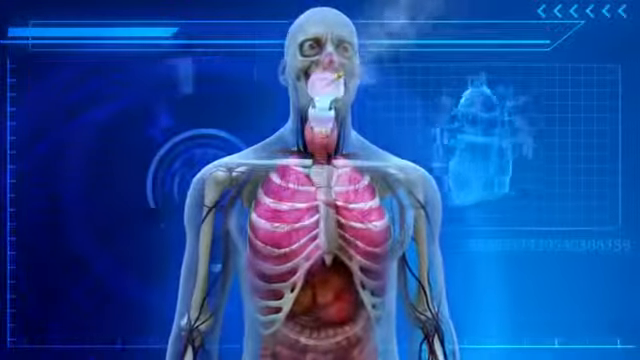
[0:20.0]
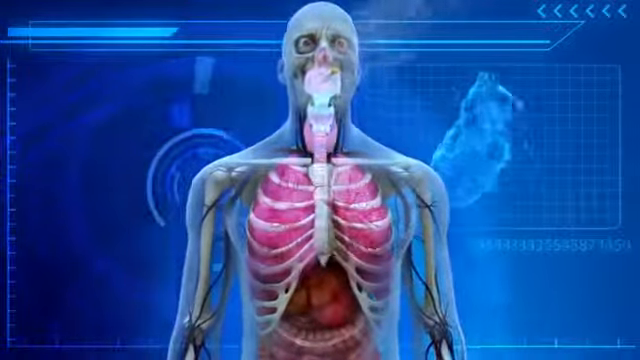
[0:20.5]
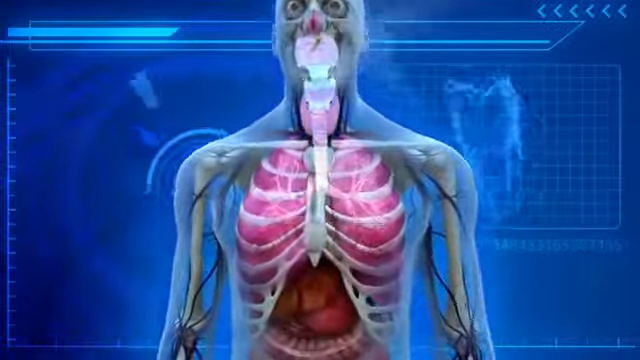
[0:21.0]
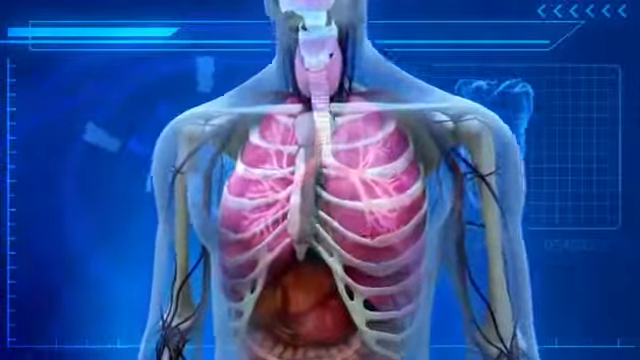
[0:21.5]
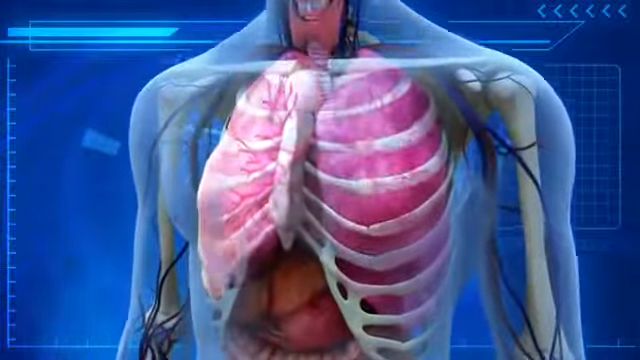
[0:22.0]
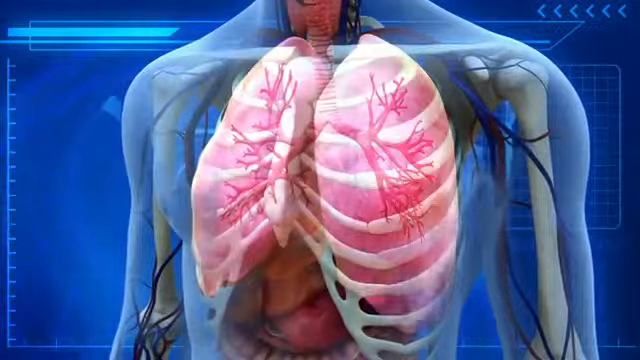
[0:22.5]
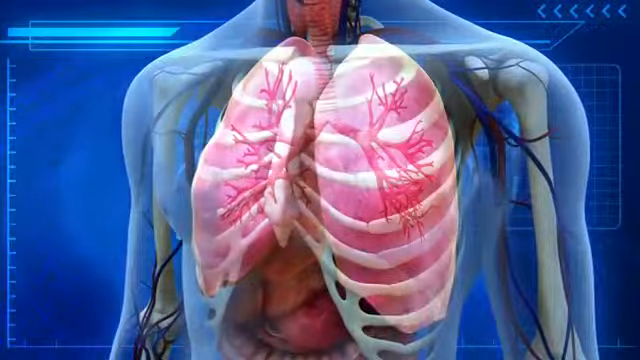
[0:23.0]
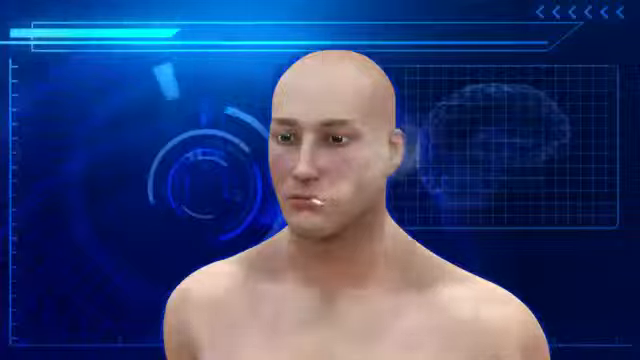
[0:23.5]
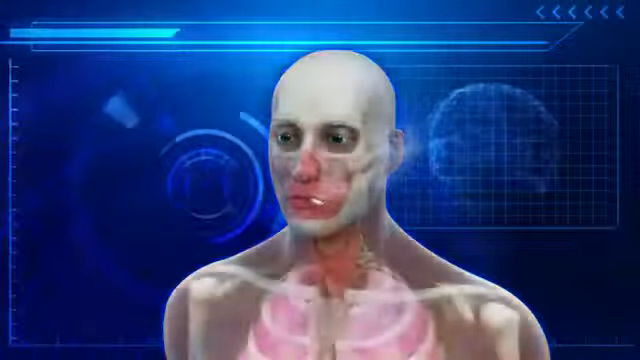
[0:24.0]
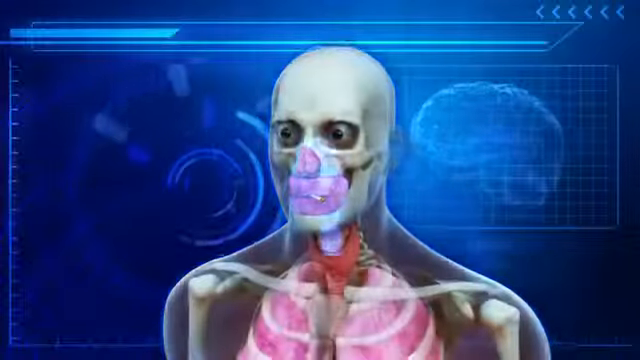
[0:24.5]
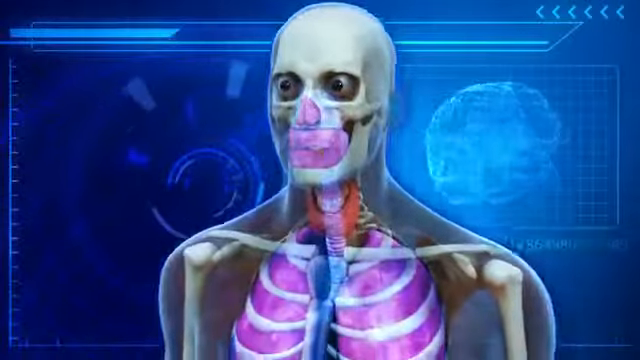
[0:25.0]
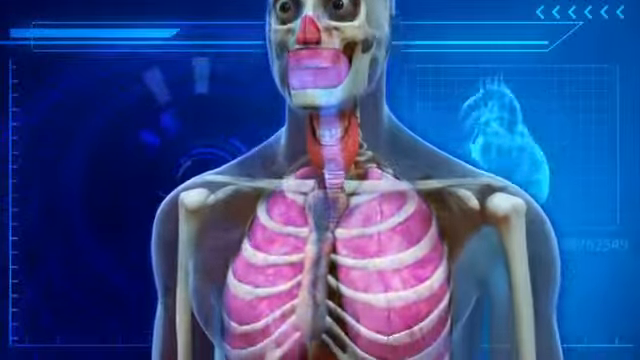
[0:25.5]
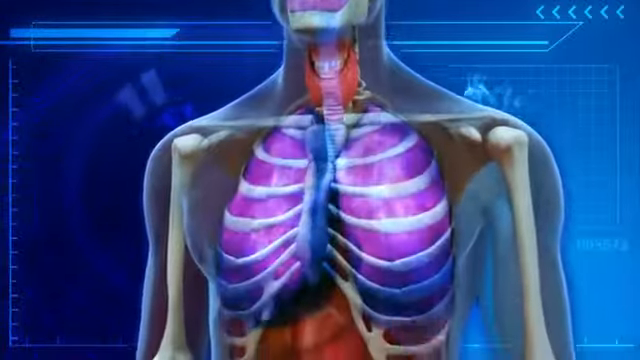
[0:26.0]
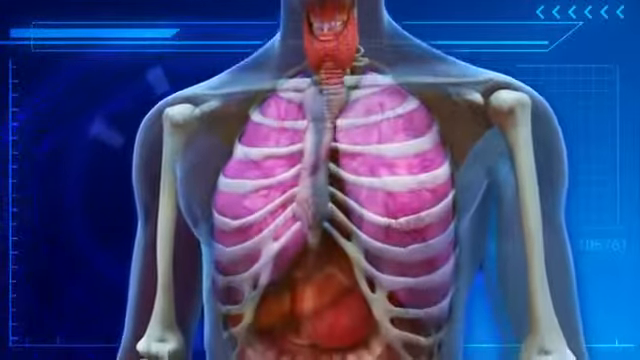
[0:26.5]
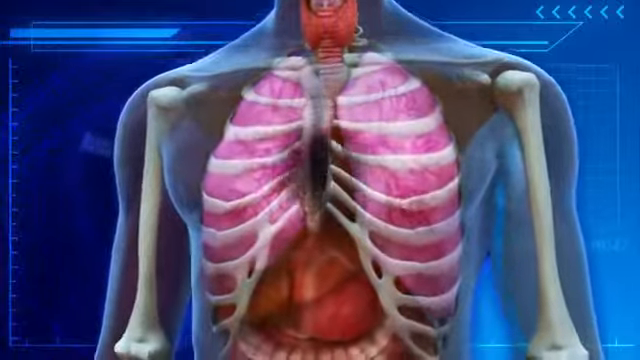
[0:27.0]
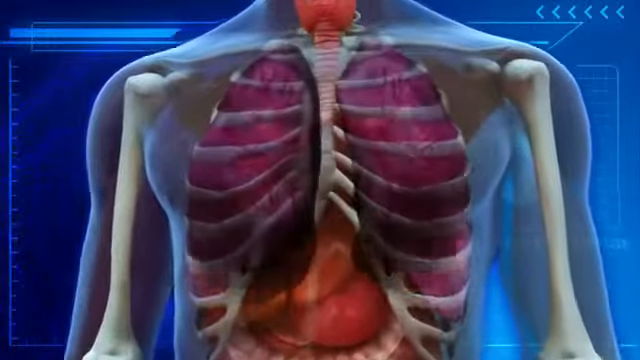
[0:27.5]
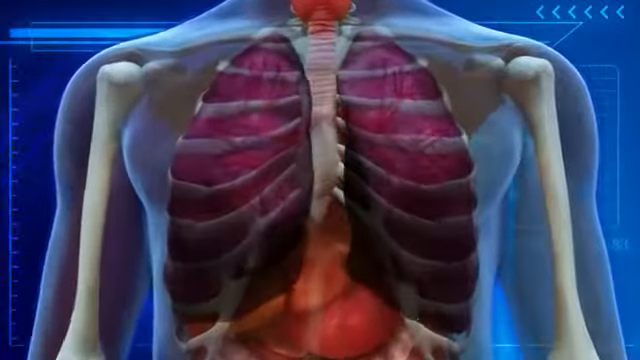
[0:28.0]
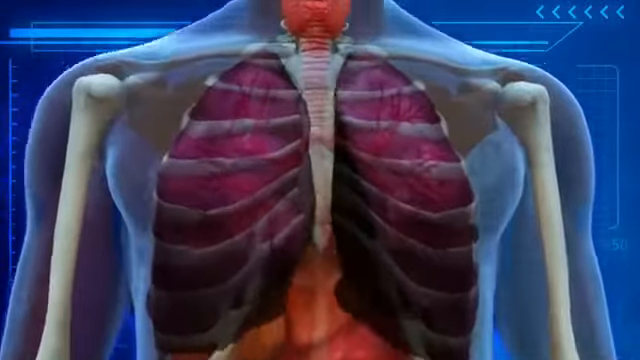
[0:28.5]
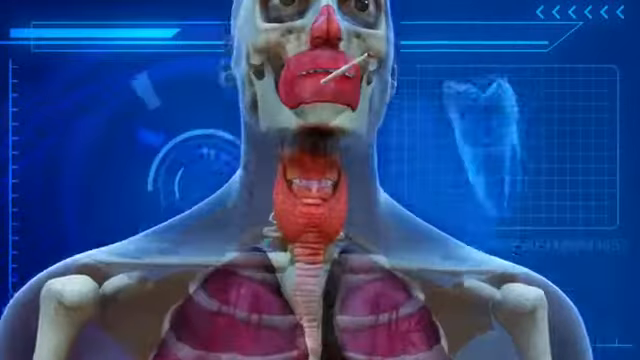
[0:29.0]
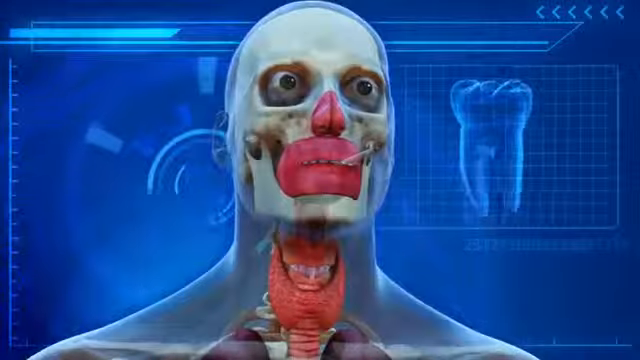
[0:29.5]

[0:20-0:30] Another animated CGI-type image shows a human body that is partly see-through, revealing the bones and organs, including the lungs. The view zooms in on the lungs and highlights them, seemingly showing their inner workings, then pulls back out and pans up to the head. The image turns into another see-through skeleton with the skull visible, and the view pans down to show the esophagus highlighted along with the lungs. The lungs turn from light to dark. The view pans up again over the skeleton, which now has what appears to be a cigarette sticking out of the left side of its mouth.